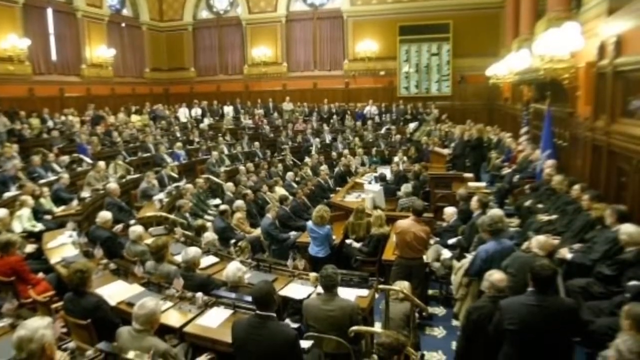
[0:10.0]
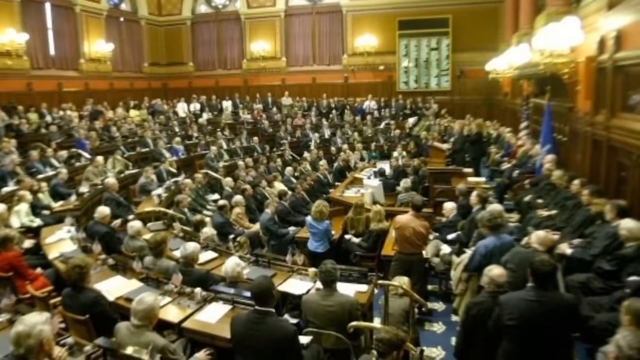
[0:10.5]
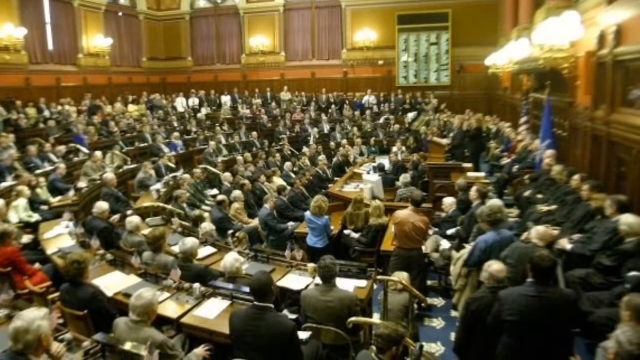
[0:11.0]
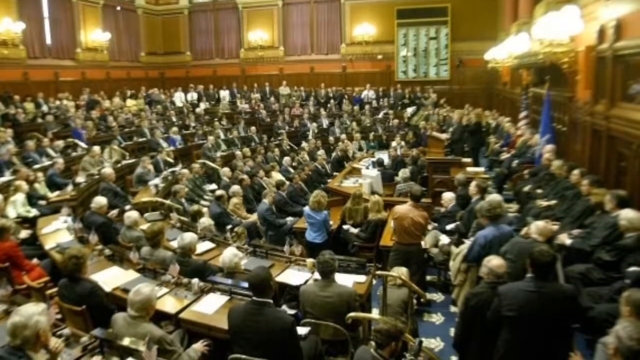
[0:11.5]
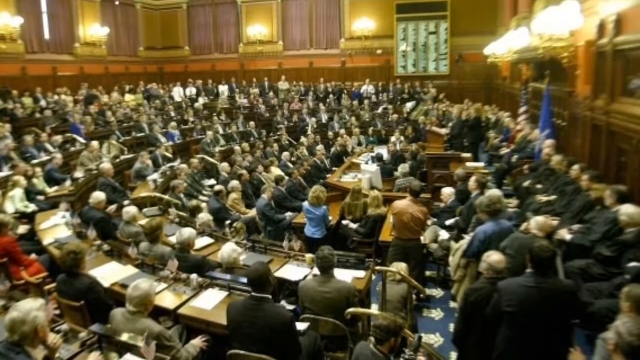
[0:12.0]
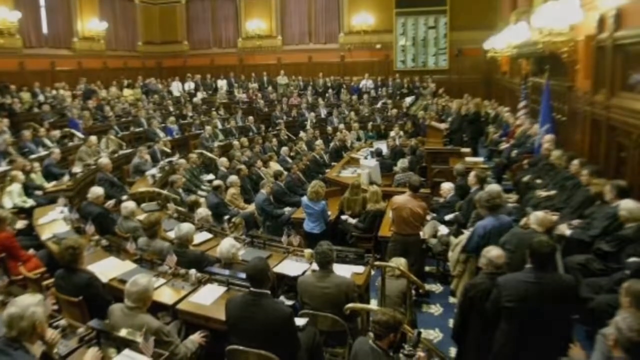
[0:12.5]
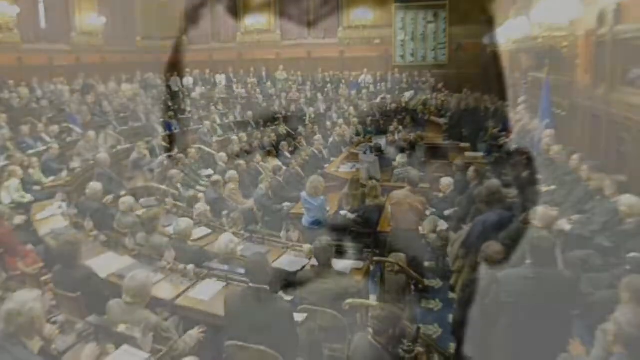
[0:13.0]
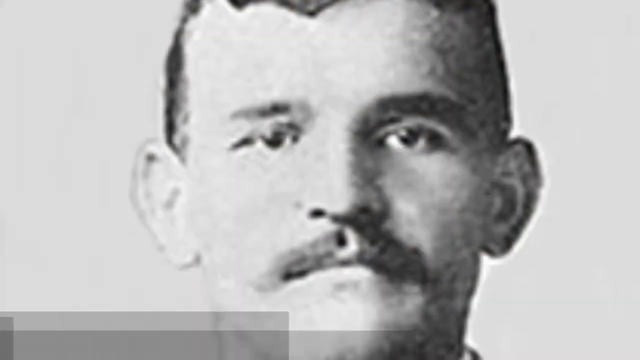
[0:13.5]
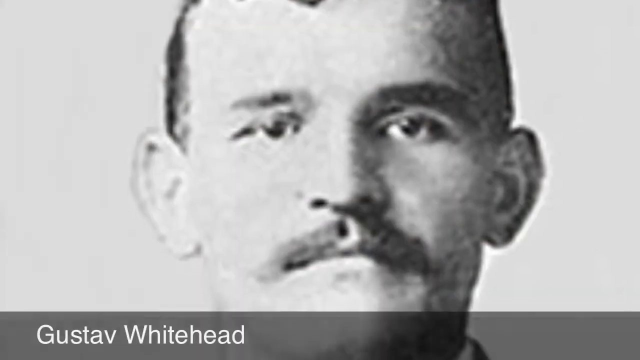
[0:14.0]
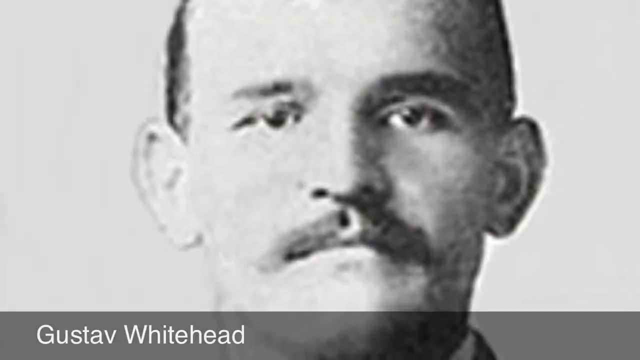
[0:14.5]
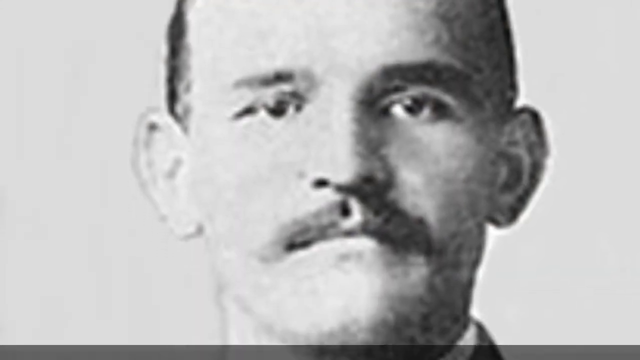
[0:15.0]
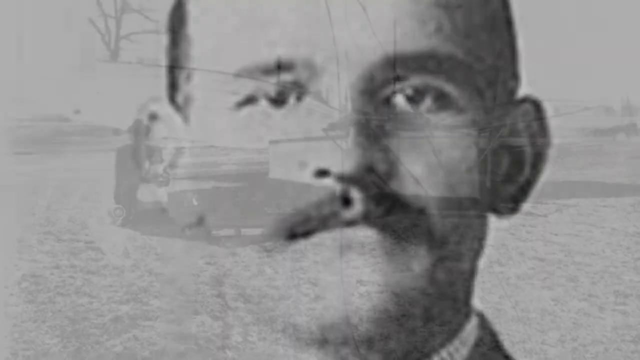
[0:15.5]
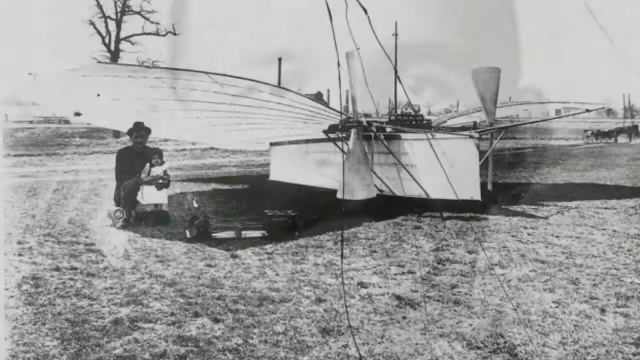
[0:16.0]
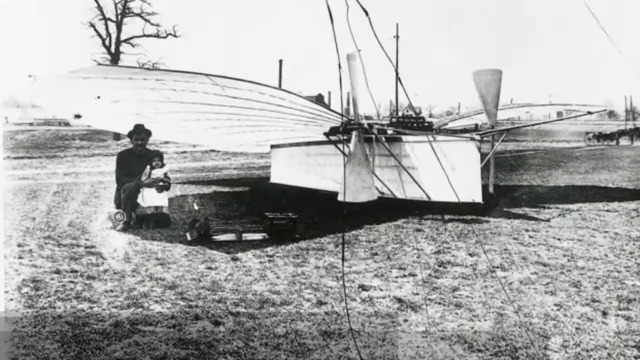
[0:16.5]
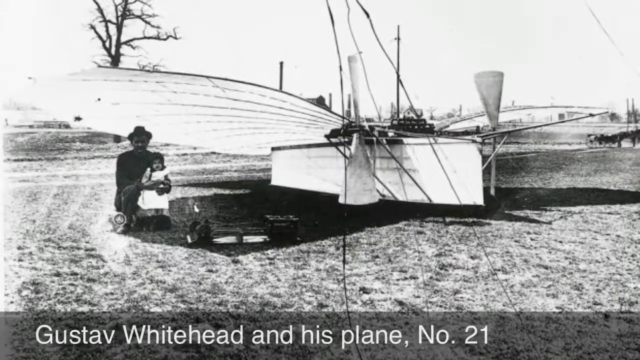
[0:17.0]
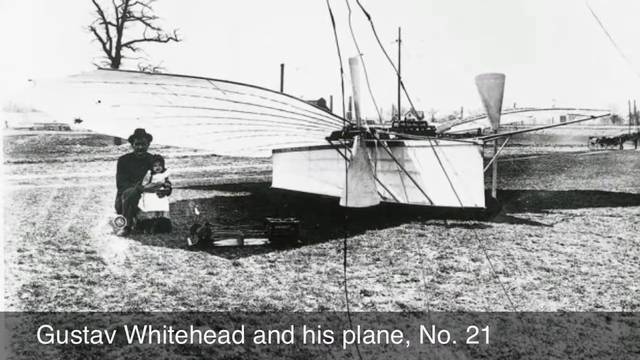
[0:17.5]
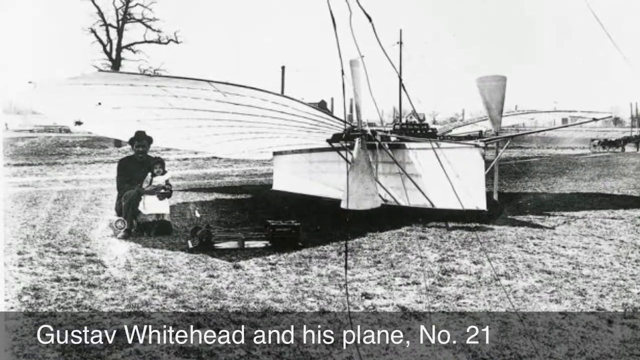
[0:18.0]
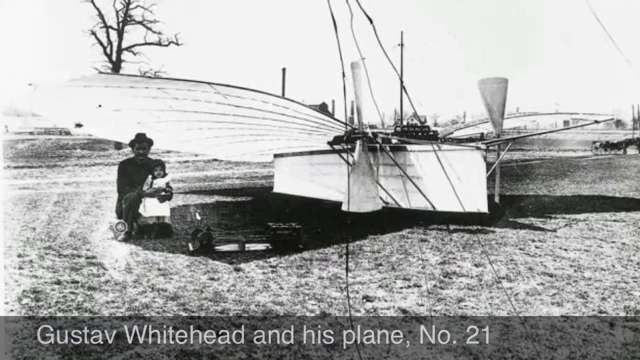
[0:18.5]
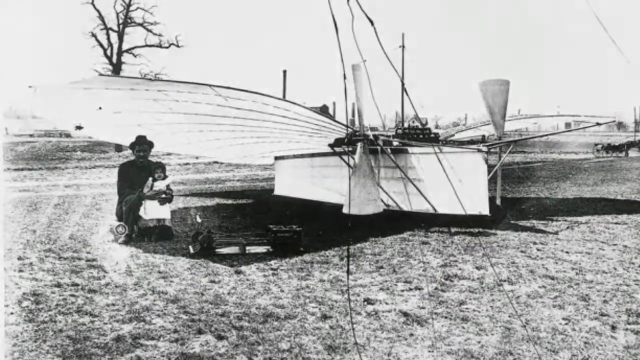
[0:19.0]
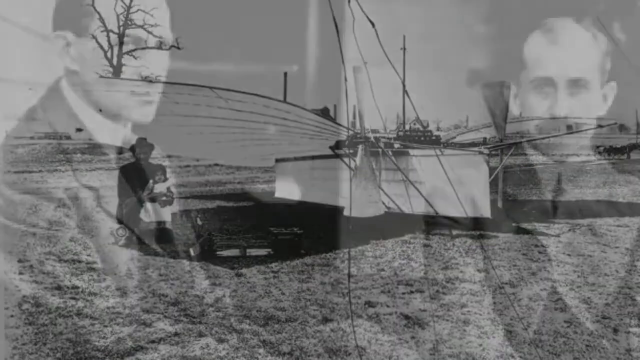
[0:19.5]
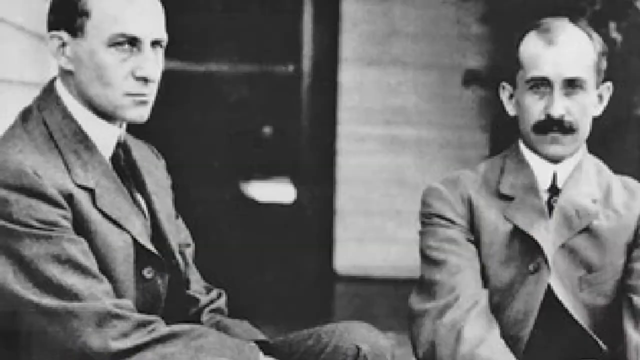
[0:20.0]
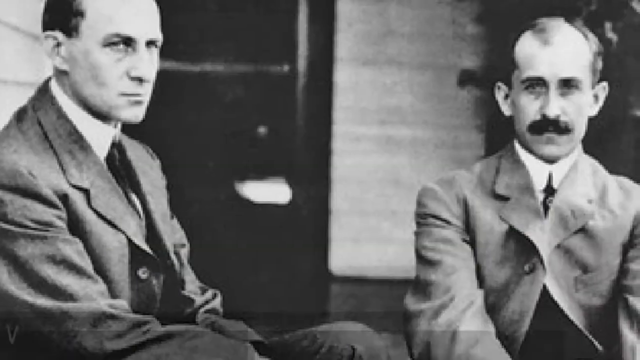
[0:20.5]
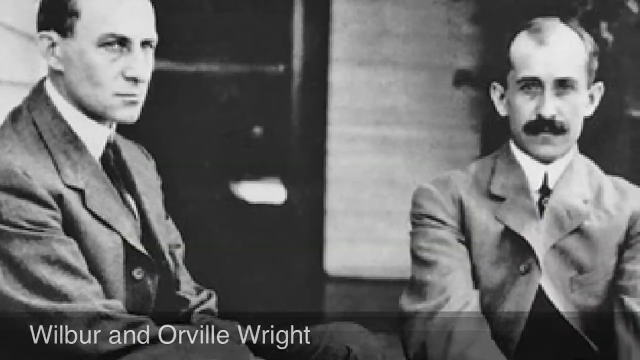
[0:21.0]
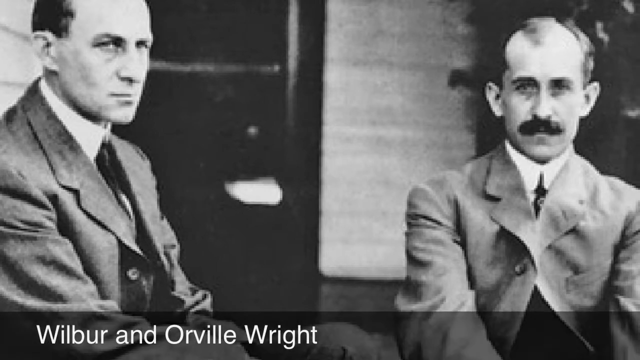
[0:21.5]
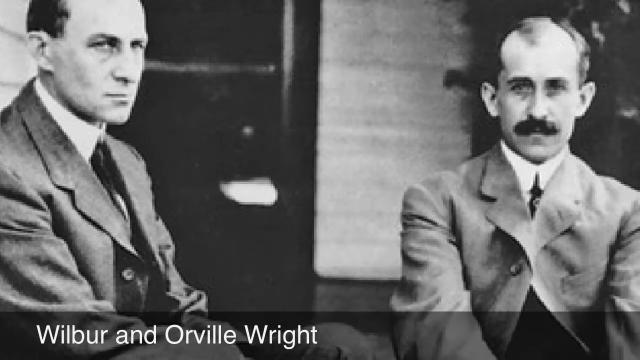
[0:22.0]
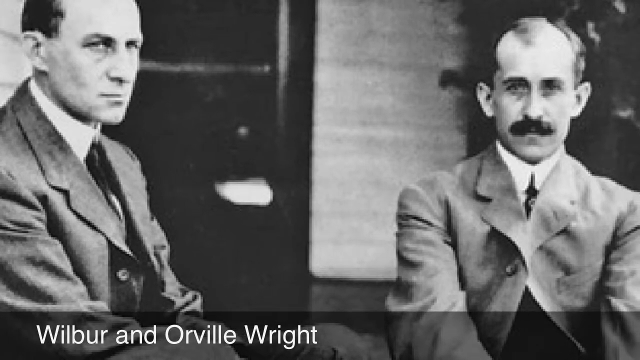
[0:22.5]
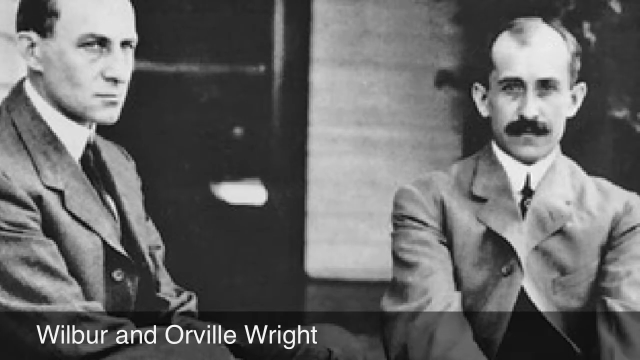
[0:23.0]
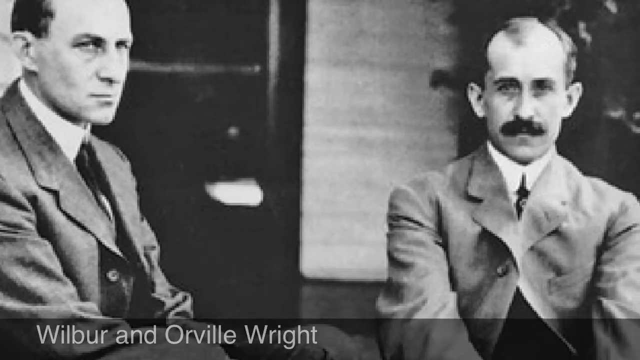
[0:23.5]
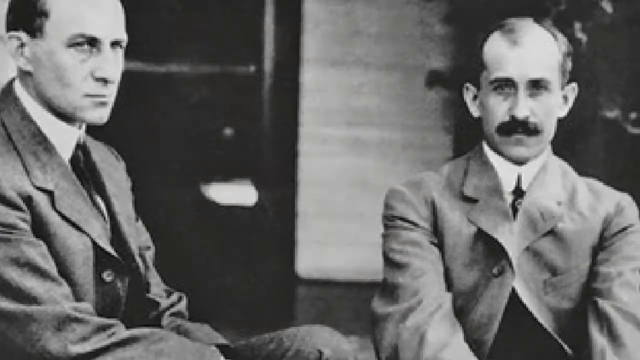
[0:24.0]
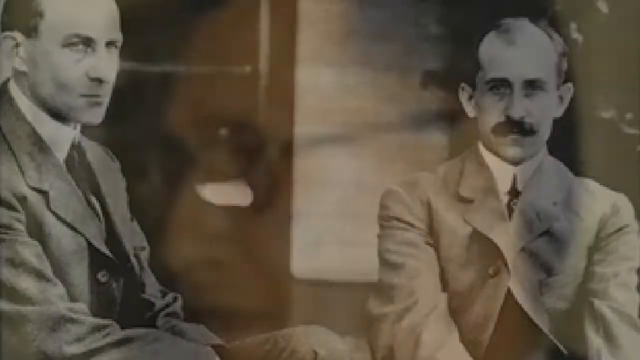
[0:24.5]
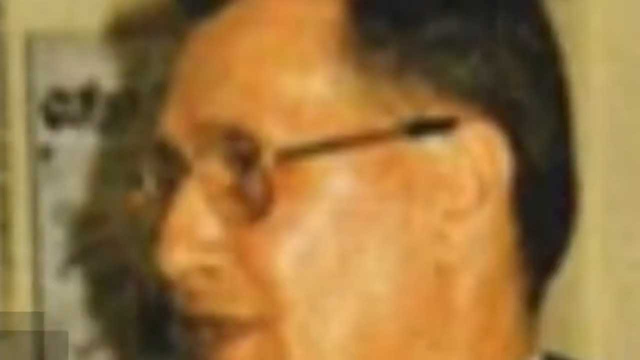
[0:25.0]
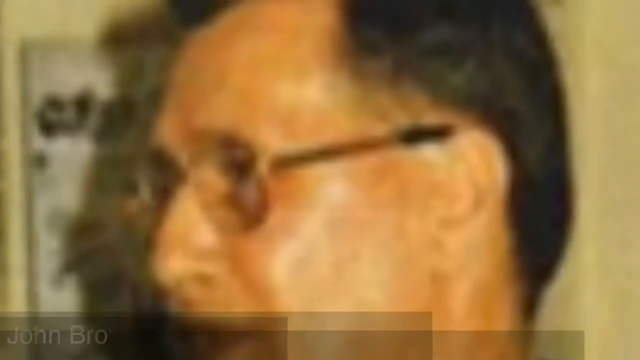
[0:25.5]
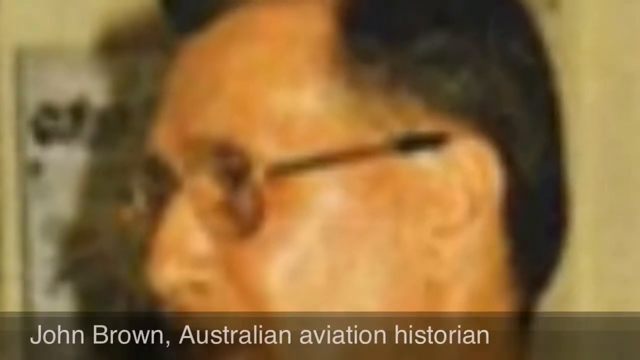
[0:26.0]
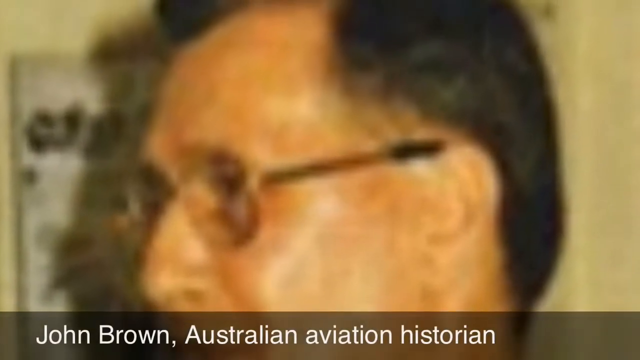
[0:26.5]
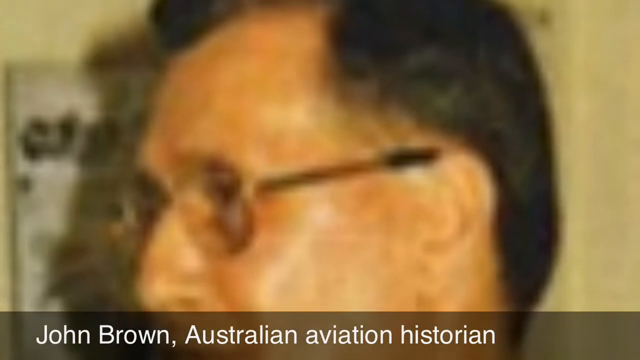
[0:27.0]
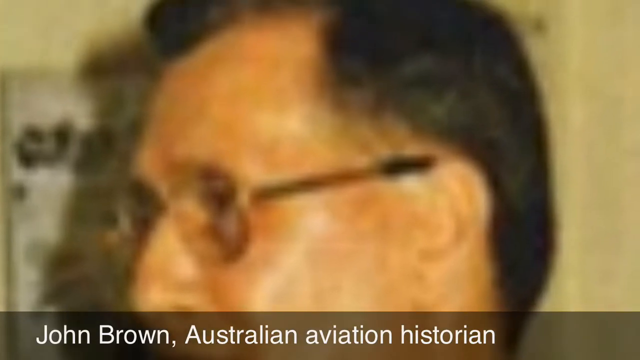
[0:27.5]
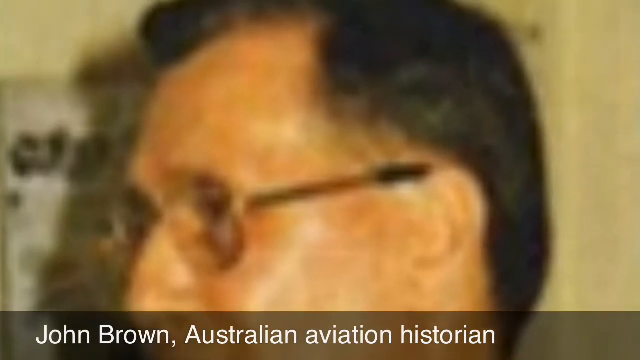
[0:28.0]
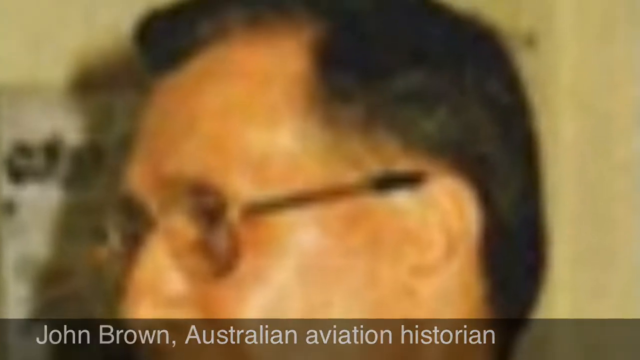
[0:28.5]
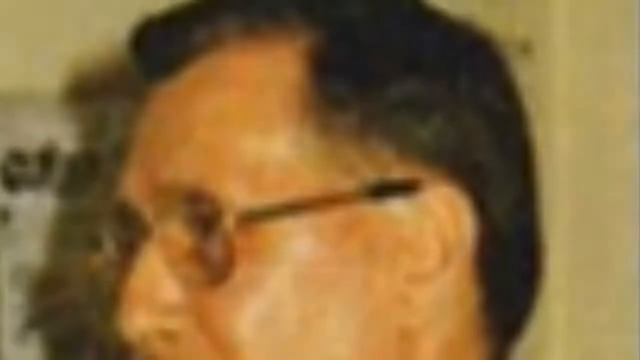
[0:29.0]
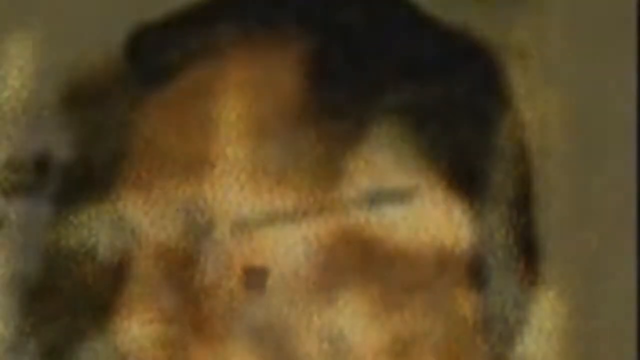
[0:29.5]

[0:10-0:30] Wilbur and Orville Wright are talking together. A first plane is shown, and Wilbur and Orville Wright are there as well. The scene then appears to be before something like Congress, where the situation and history are being discussed.